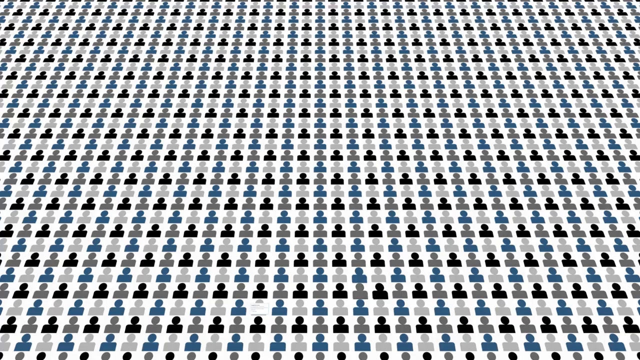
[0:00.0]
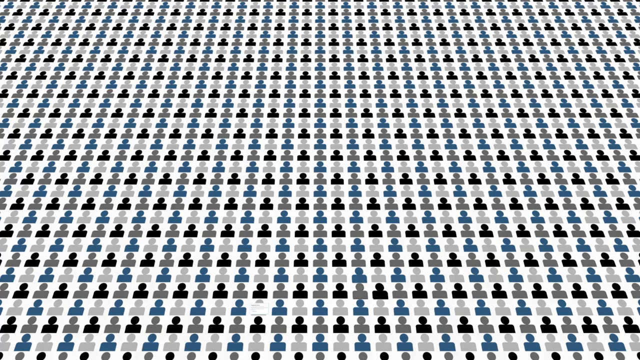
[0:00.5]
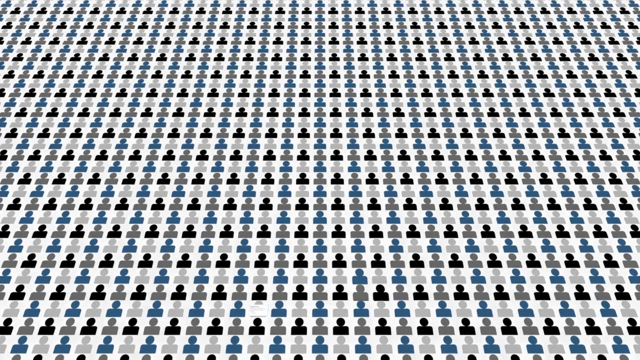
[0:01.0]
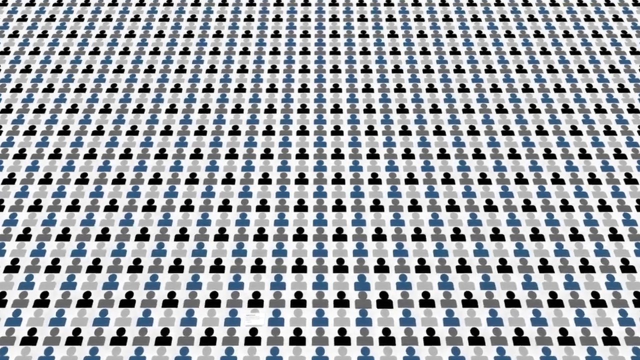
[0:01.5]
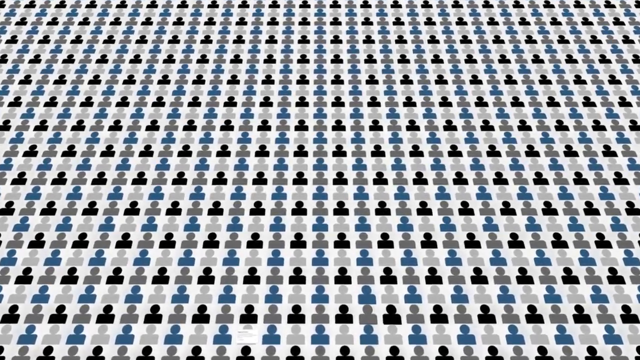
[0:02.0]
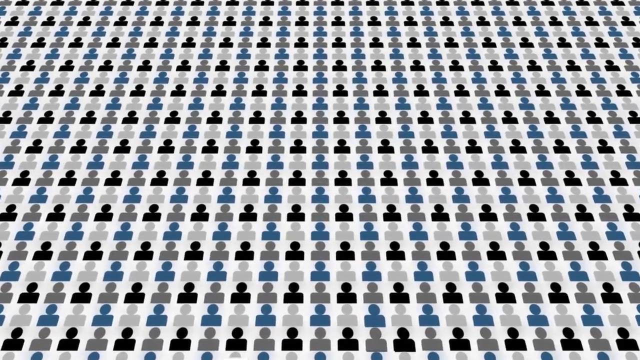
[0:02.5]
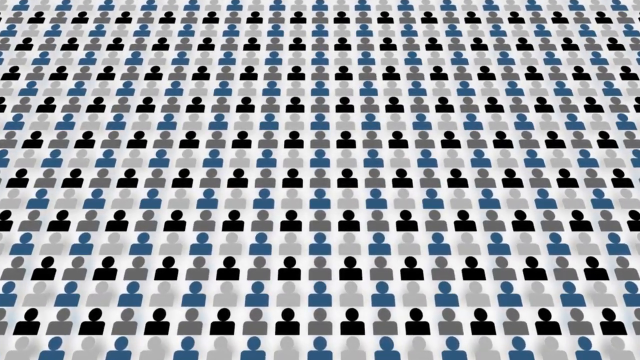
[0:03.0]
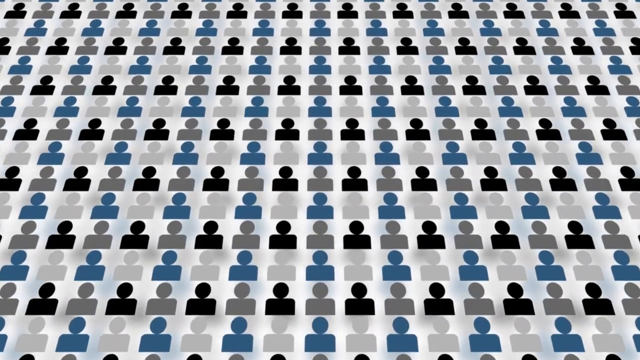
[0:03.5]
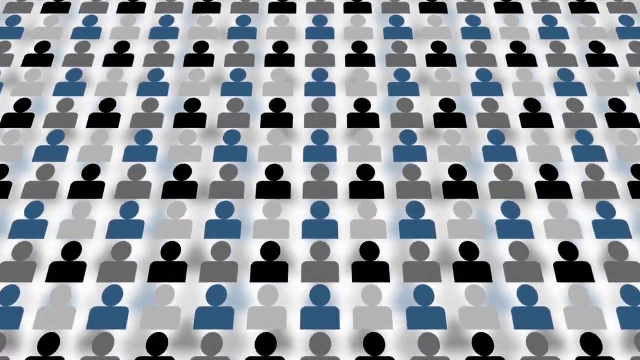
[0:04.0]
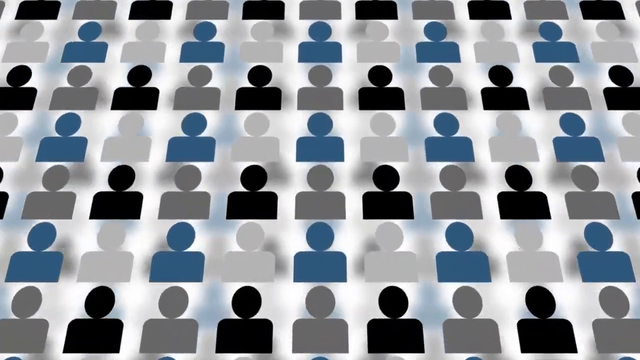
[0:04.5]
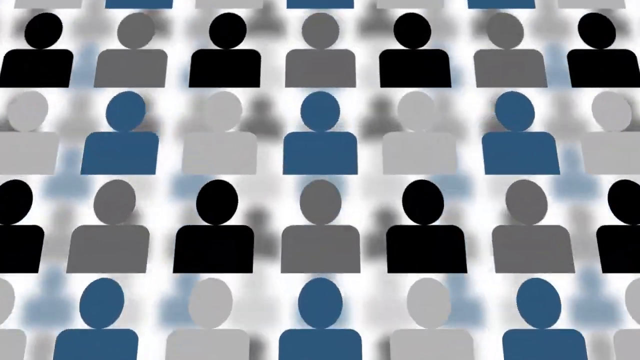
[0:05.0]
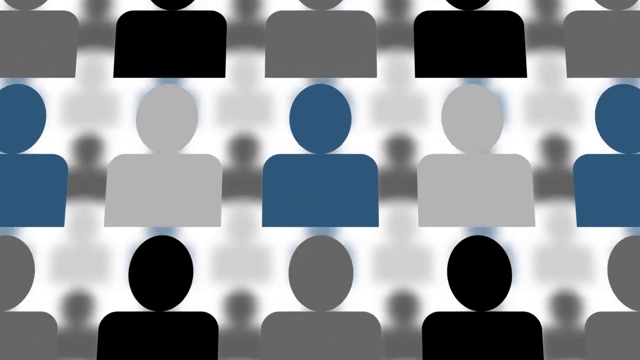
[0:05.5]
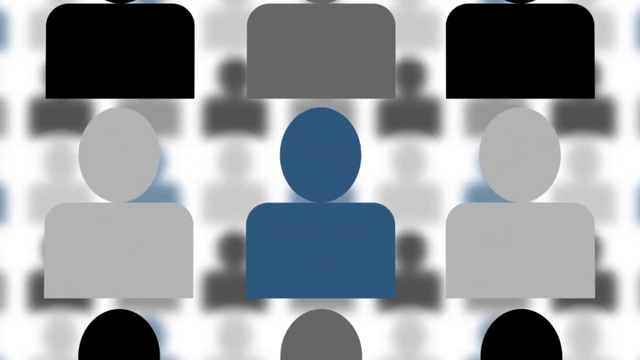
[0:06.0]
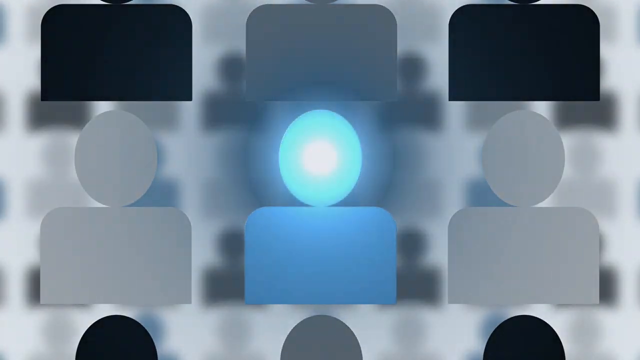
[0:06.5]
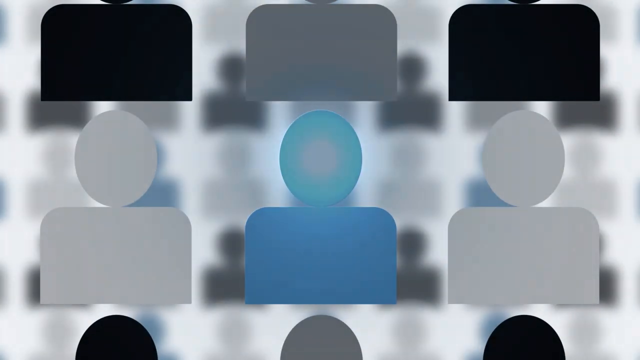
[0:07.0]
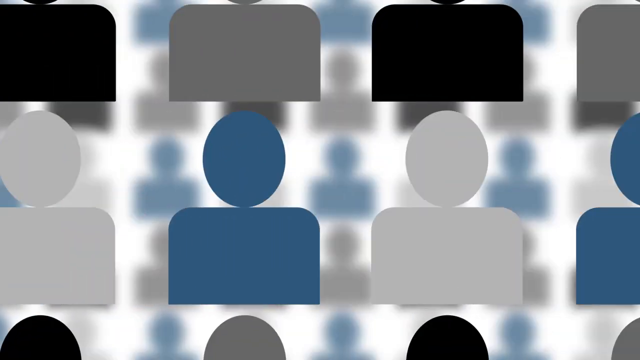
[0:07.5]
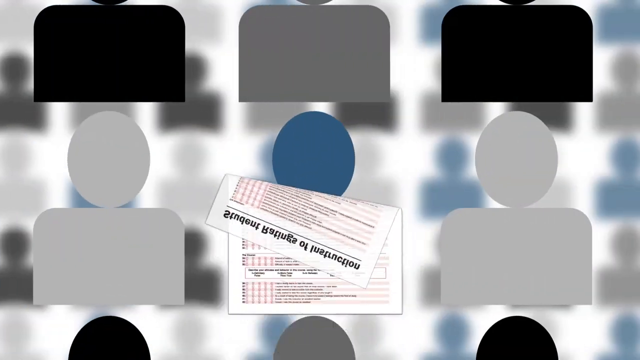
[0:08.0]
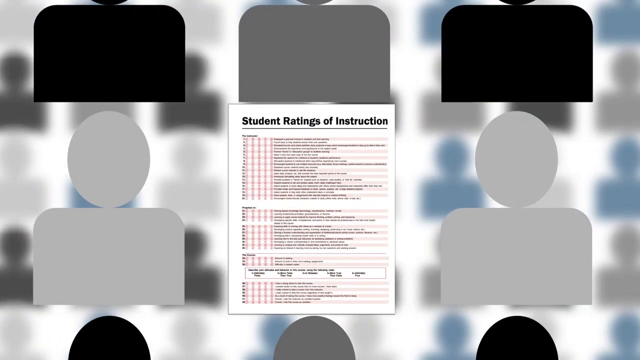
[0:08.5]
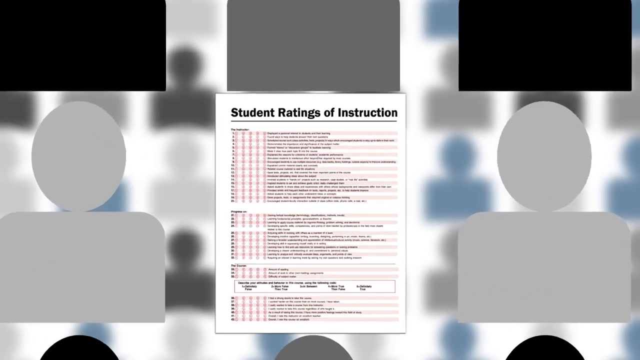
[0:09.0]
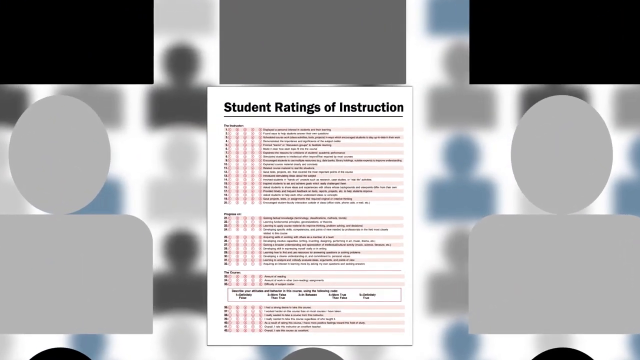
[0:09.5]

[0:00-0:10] Rows of head-and-shoulder silhouettes in black, a kind of bluish gray, and a sort of light gray form a pattern across the screen, apparently hundreds of them. The camera kind of zooms in on them until only three head-and-shoulder shots are visible, then kind of moves over and highlights a sheet of paper that appears to say something about student instructions.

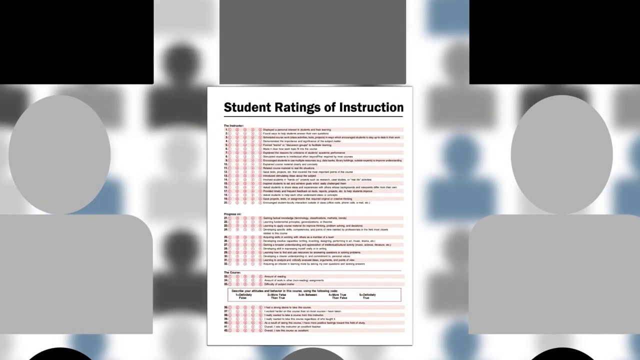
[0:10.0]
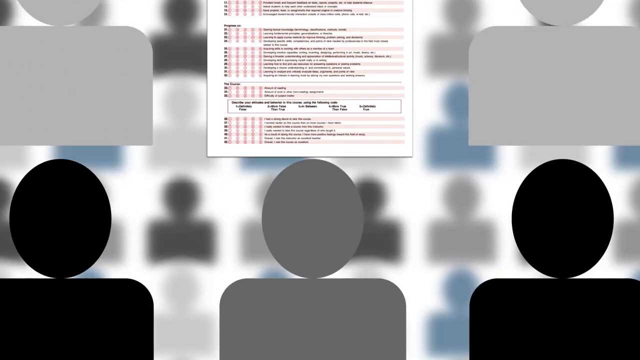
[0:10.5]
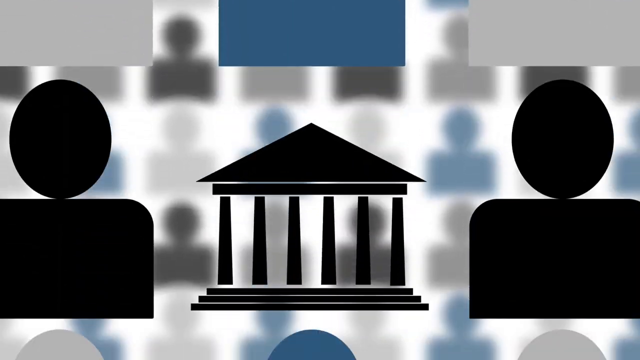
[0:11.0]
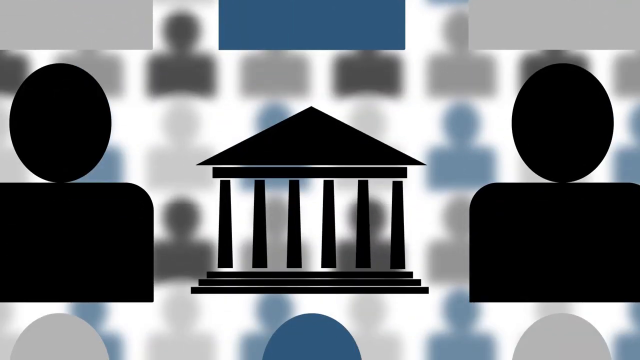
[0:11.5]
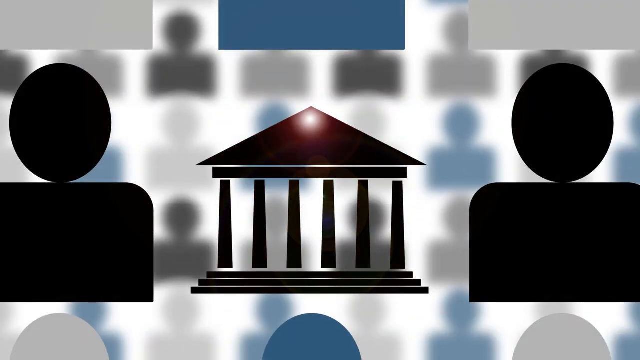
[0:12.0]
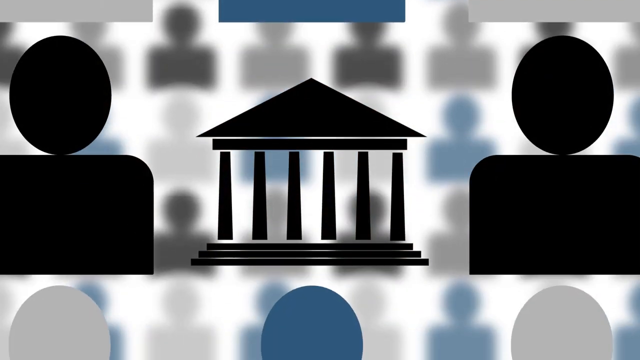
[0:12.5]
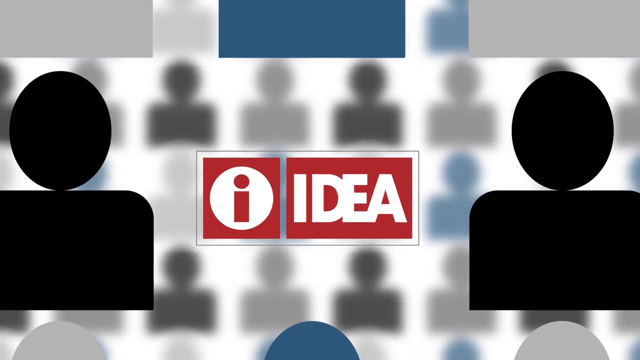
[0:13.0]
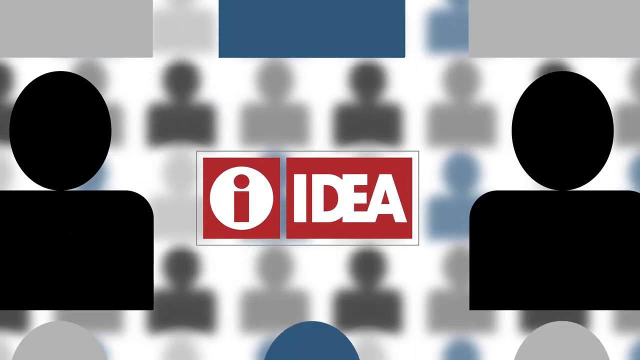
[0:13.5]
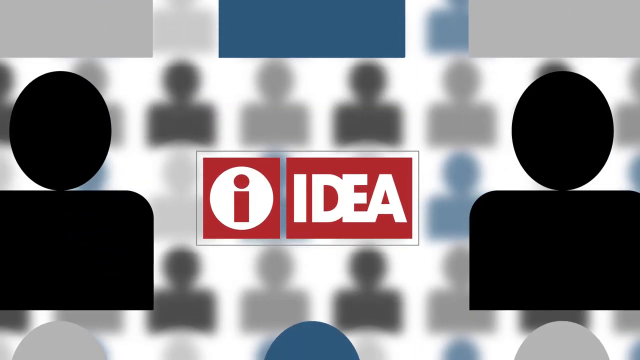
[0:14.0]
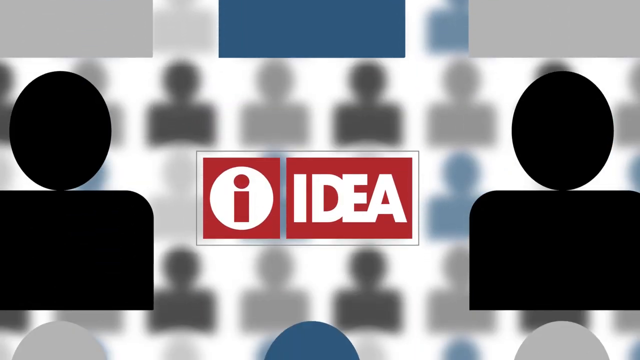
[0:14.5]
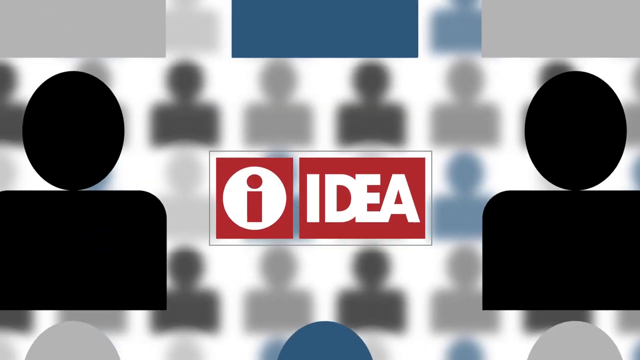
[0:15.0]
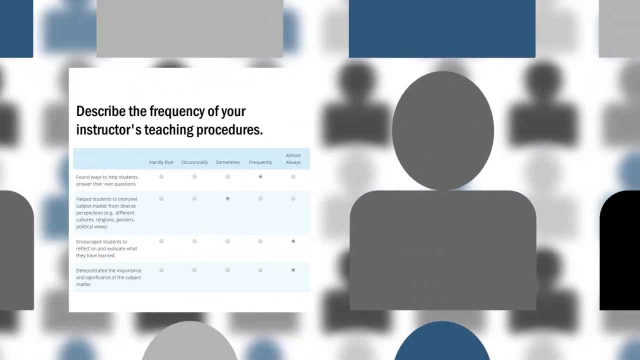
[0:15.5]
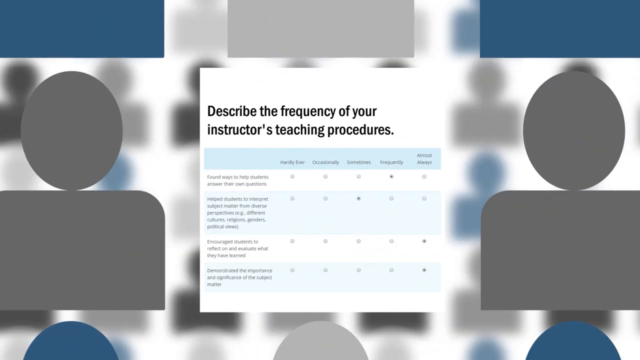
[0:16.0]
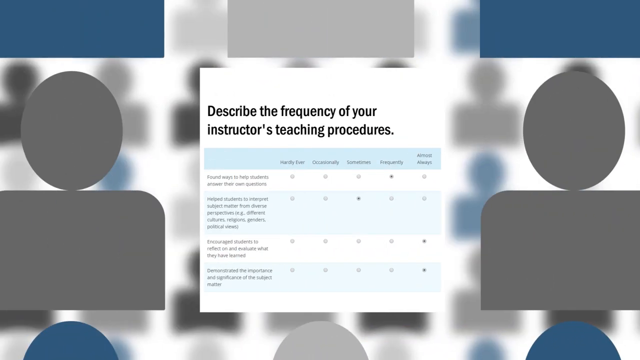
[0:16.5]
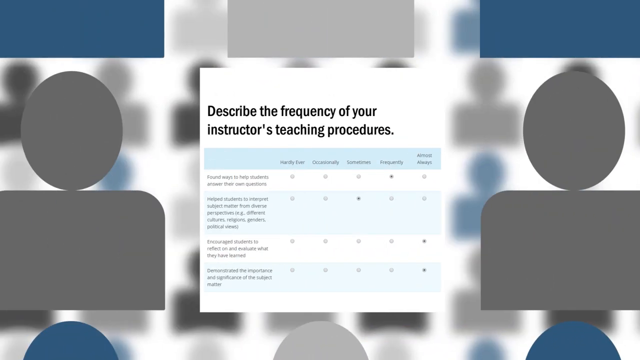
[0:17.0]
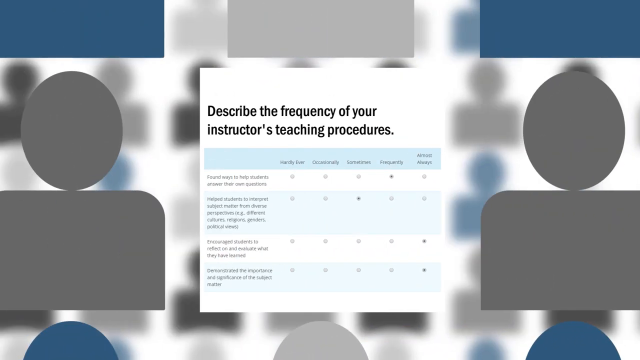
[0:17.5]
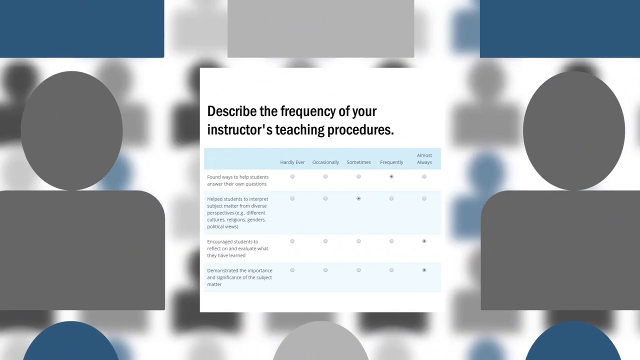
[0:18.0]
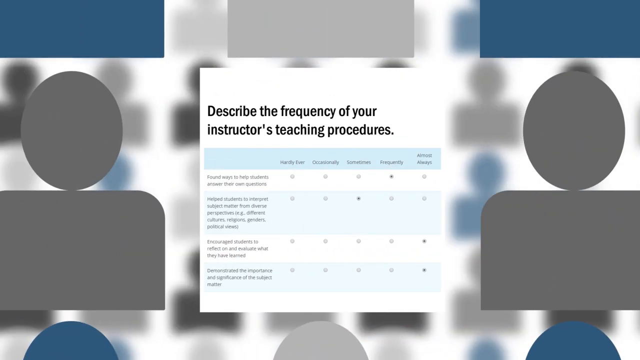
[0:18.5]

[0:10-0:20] The view is zeroed in on three of the head-and-shoulder shots. It starts with "student ratings of instruction." The view then moves down to what looks like an outline of a building with pillars, maybe meant to be a courthouse. Next the screen moves down to something that says "idea," and finally to "describe the frequency of your instructor's teaching procedures."